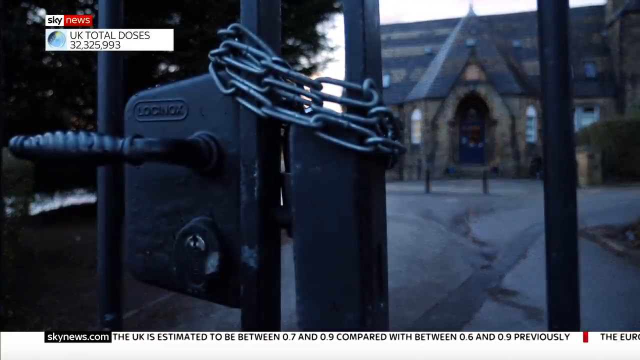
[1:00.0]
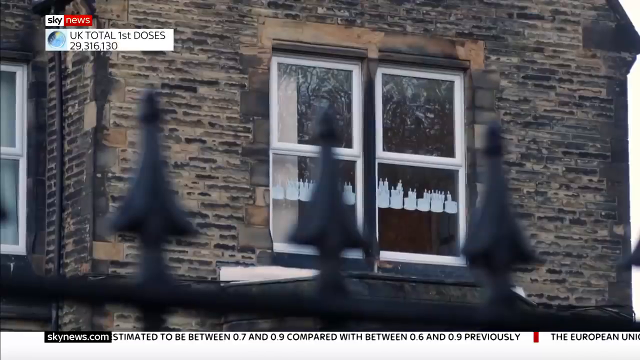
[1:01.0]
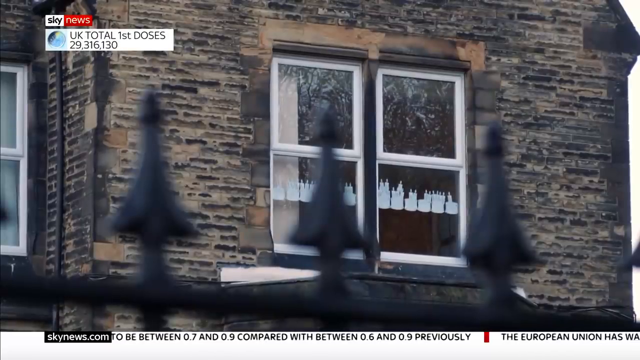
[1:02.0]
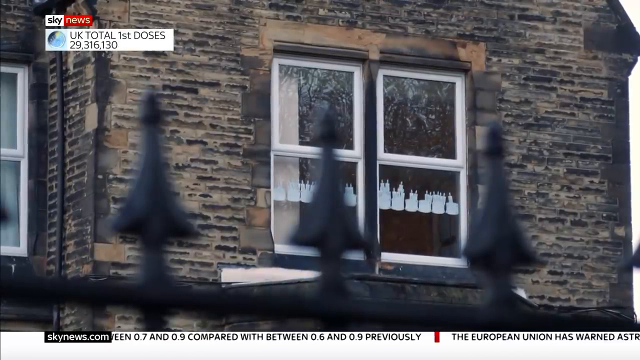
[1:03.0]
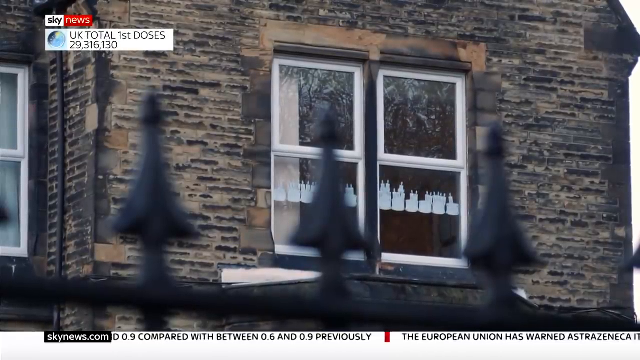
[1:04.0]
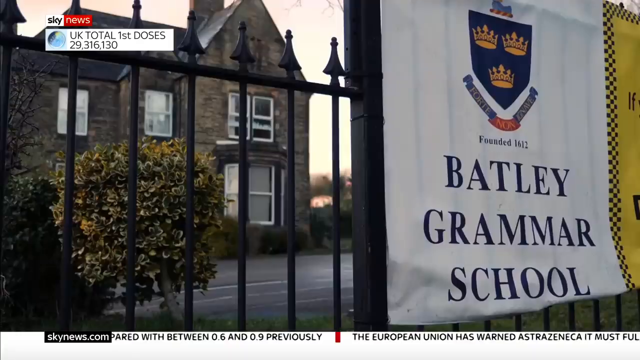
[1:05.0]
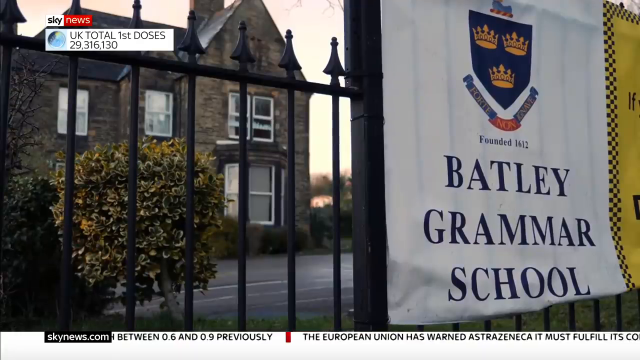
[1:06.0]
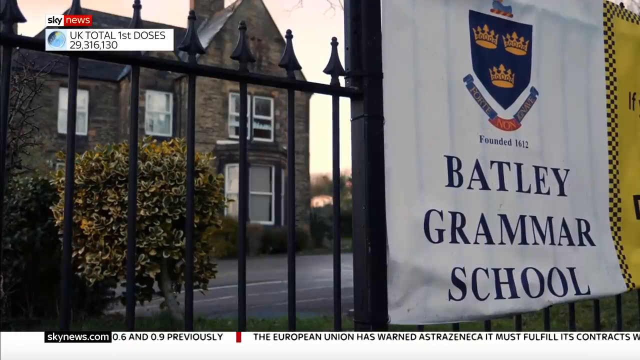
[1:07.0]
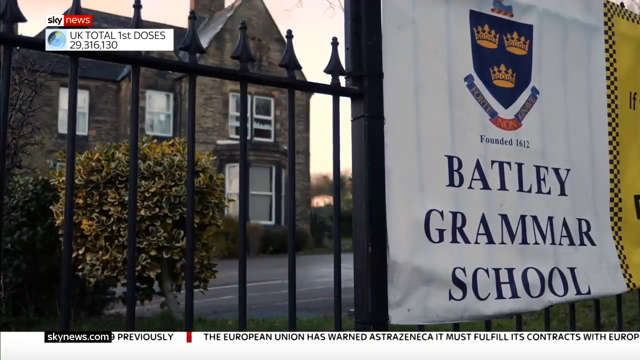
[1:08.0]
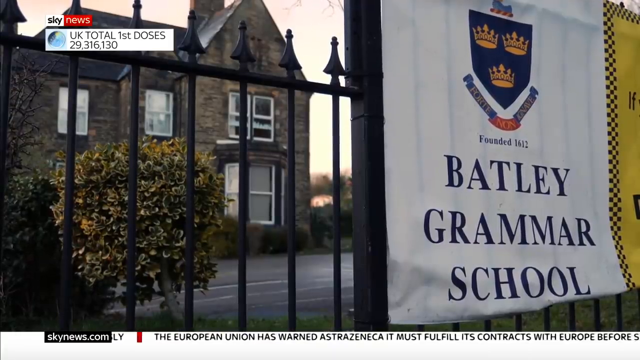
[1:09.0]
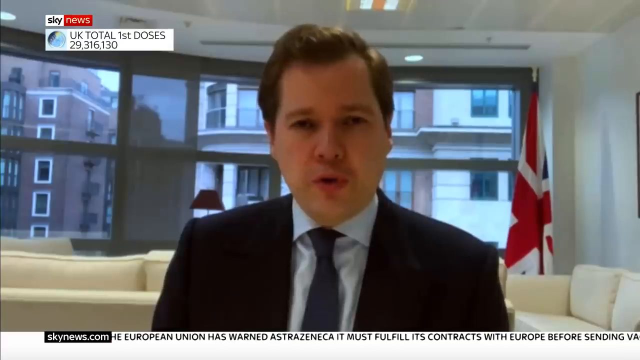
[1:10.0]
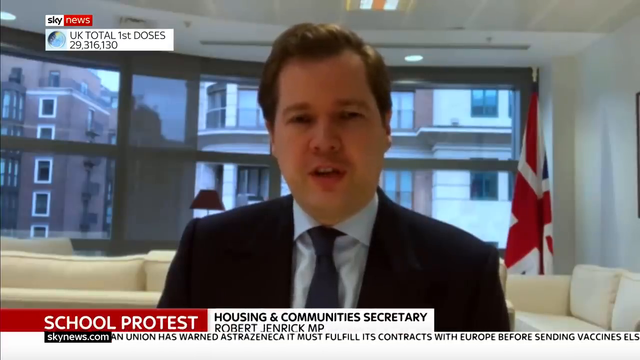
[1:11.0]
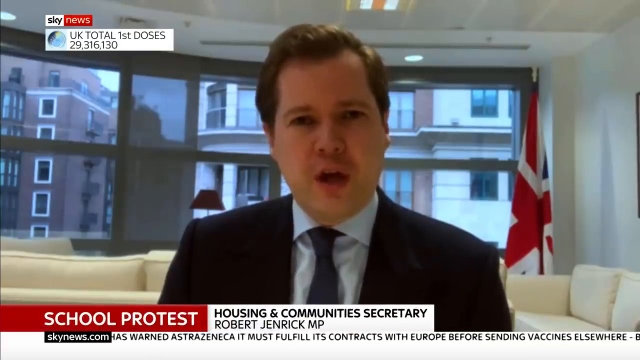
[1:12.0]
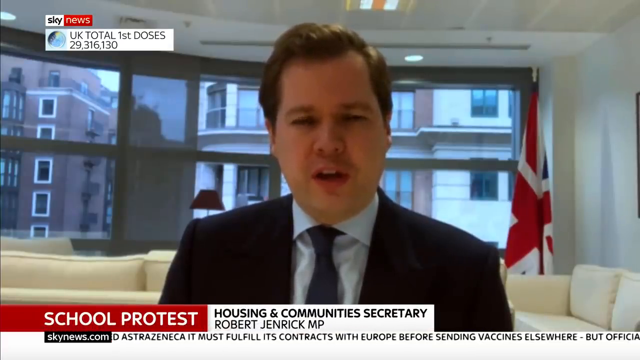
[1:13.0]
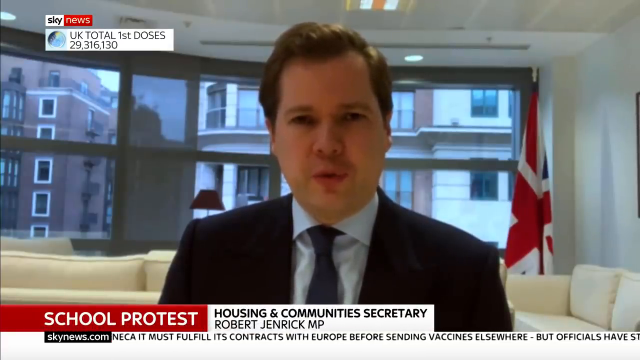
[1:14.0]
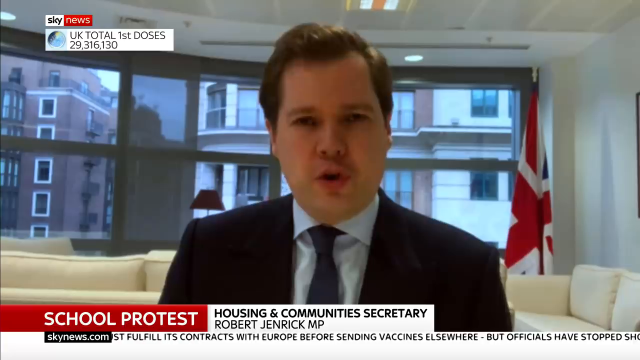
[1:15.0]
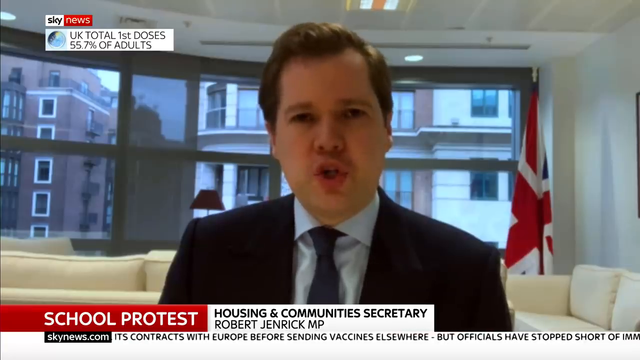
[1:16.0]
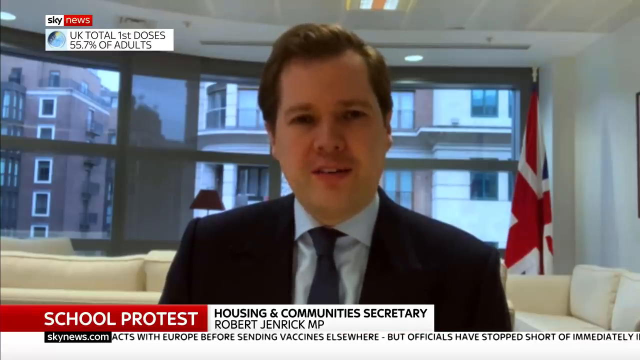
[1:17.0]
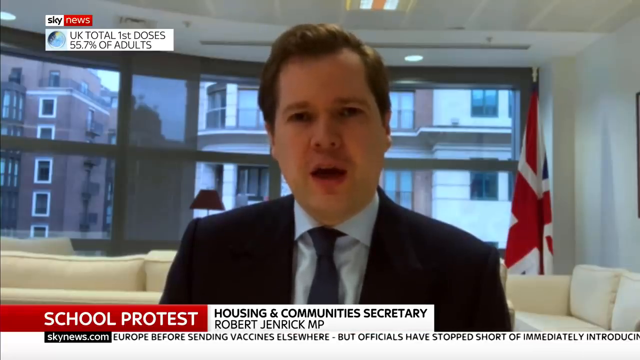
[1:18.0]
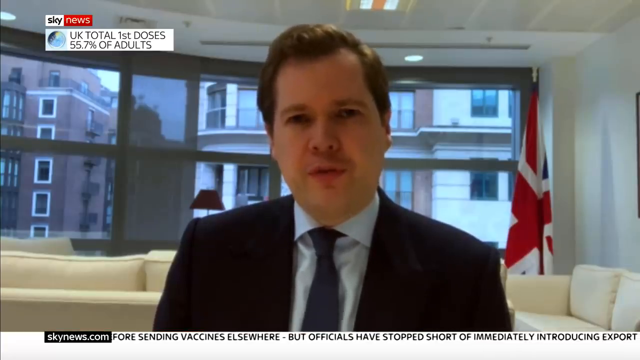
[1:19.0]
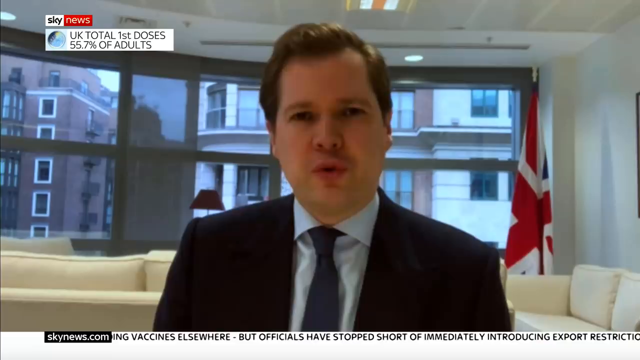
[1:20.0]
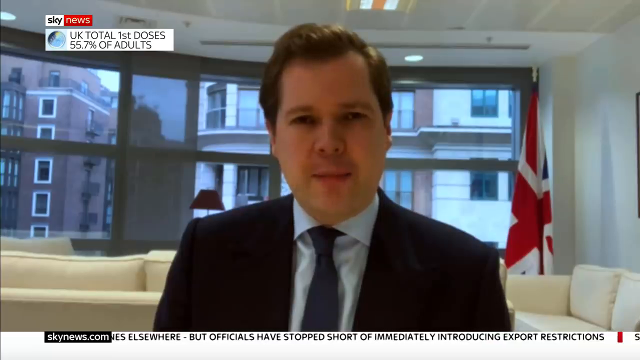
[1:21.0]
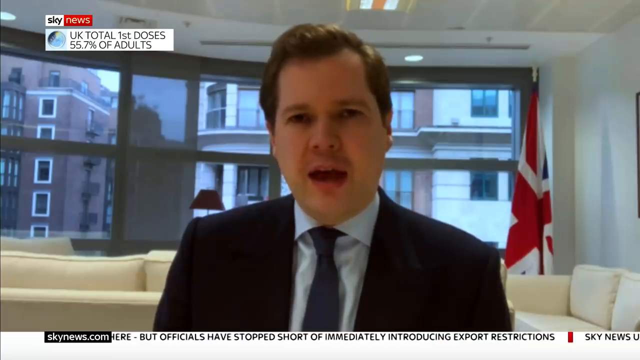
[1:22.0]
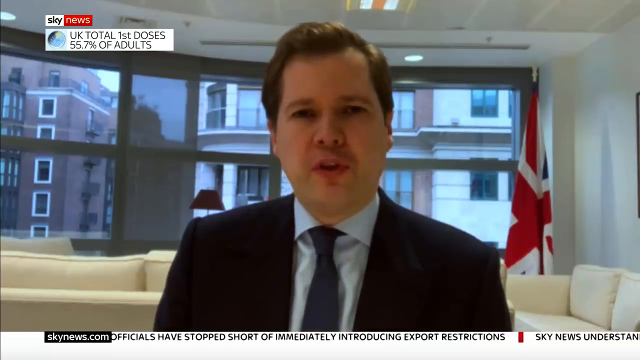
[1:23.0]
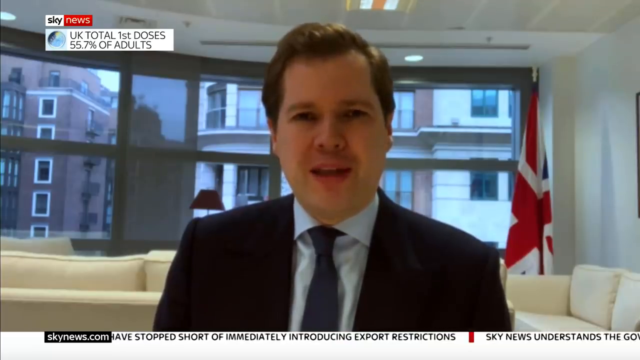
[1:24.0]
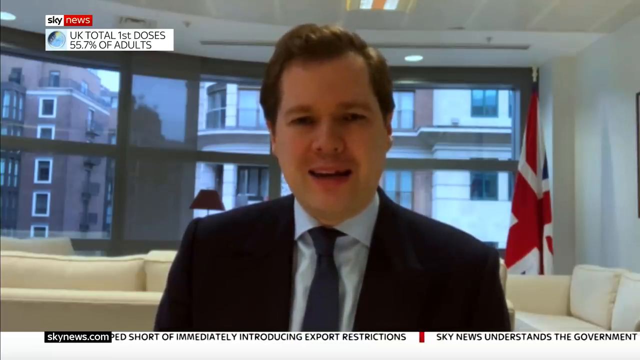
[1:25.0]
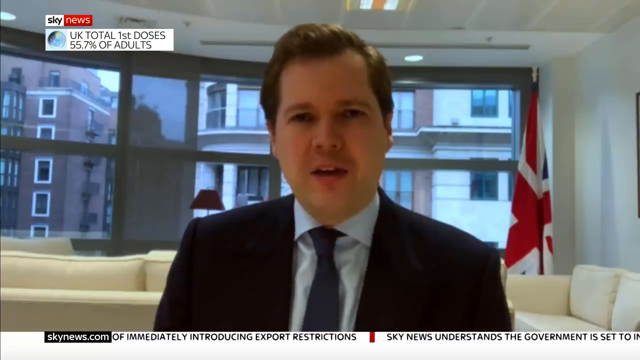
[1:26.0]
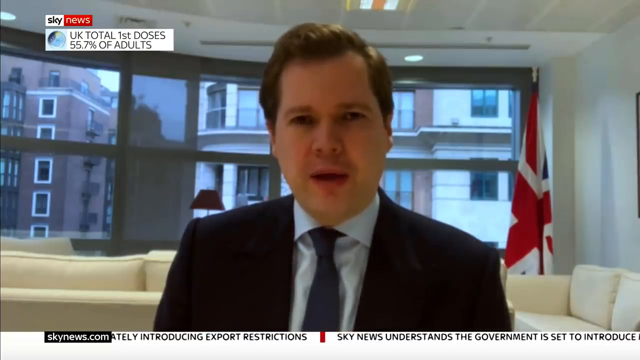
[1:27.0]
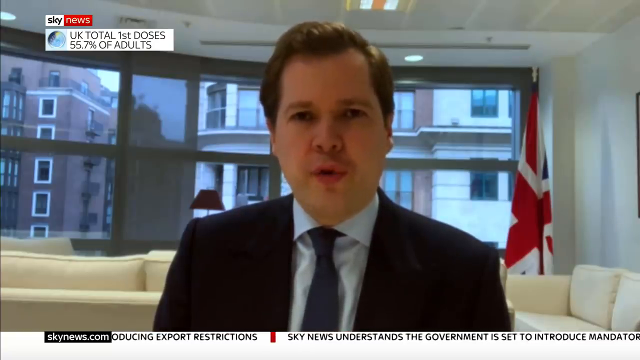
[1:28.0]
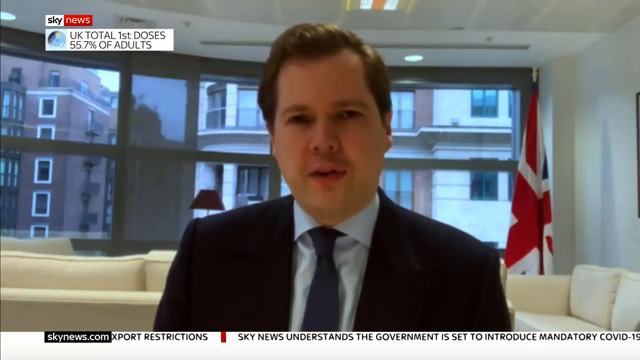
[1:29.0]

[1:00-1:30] Sky News appears in the top left, with "UK total doses 32,325,993". The gates are closed with chains, the buildings are barred, and there is no one around; the windows show nothing inside. Text then shows "UK total first doses 29,316,130". The gates, the fence and the ancient building of Bartley Grammar School are shown; the school is closed with no one inside. The scene then moves to a newsroom where a man in a suit talks, with a UK flag in the background, other buildings visible through the windows, and white seats. A headline reads "school protest, housing and community secretary Robert Jenrick MP" as the man keeps speaking. Text then shows "UK total first doses 55.7% of adults".